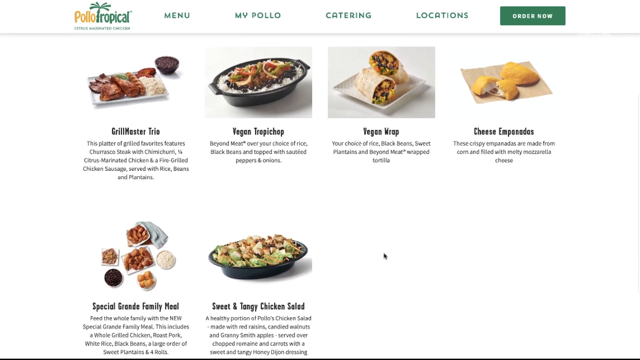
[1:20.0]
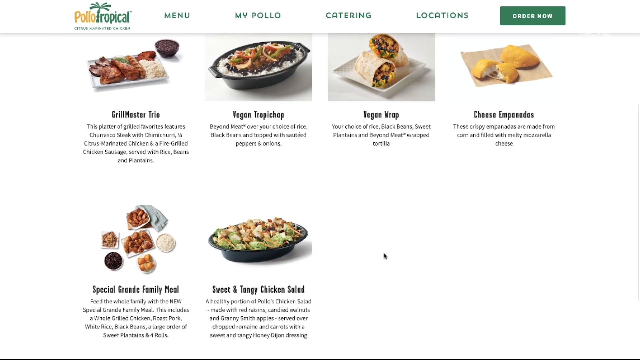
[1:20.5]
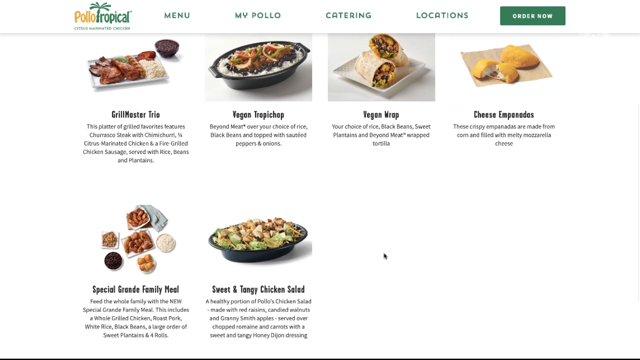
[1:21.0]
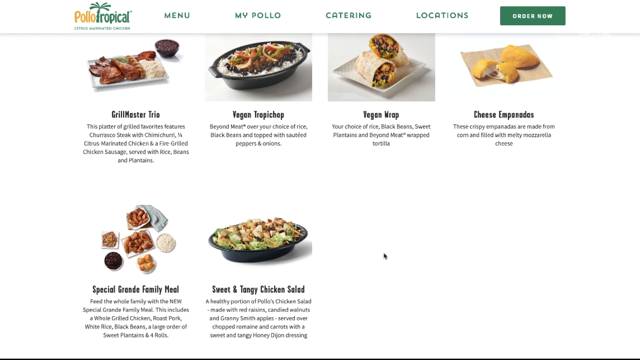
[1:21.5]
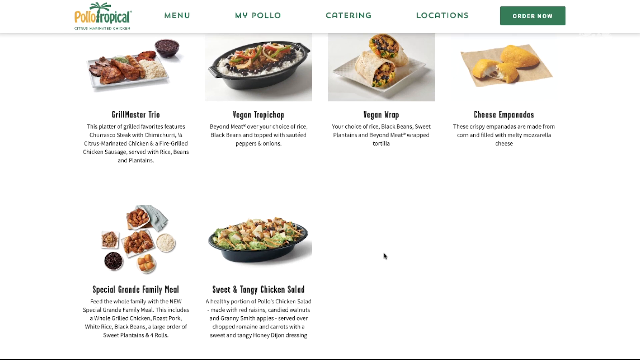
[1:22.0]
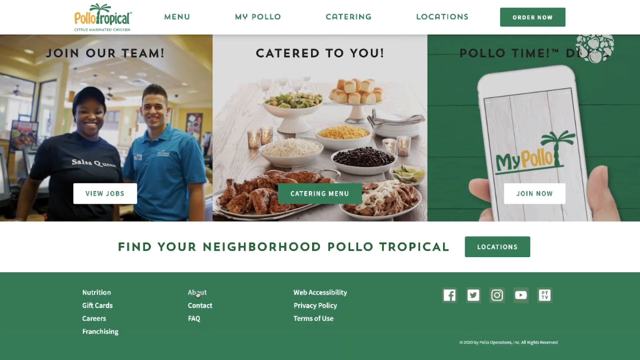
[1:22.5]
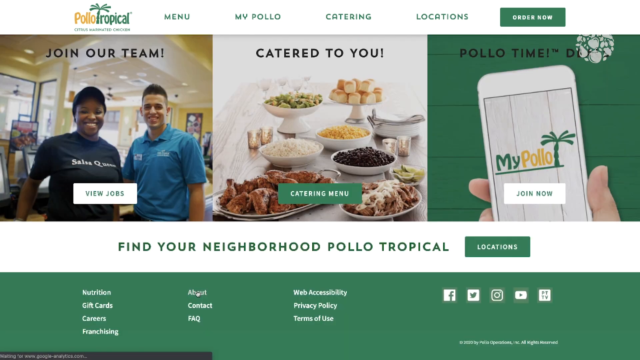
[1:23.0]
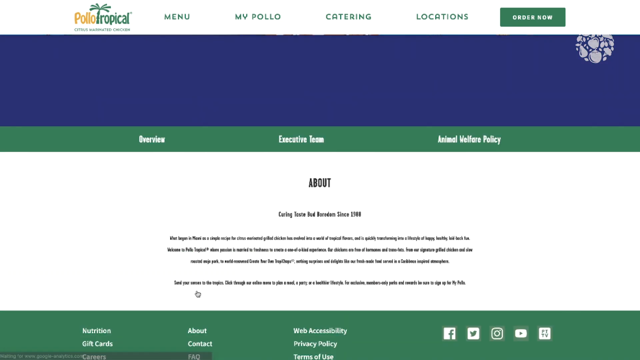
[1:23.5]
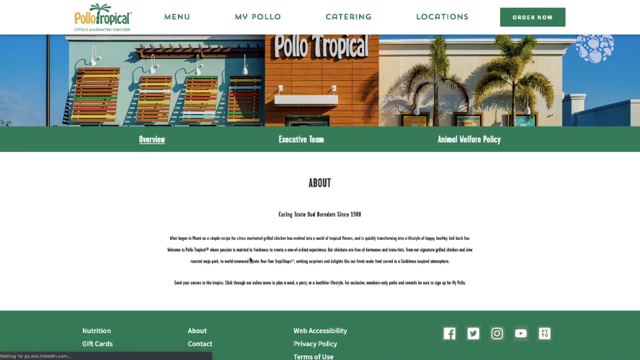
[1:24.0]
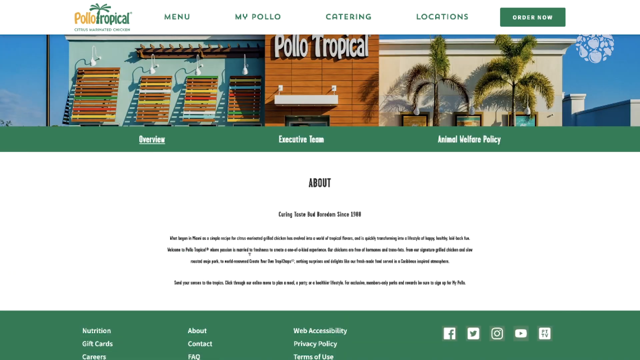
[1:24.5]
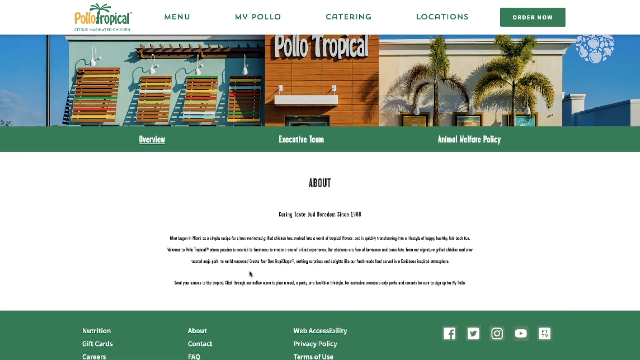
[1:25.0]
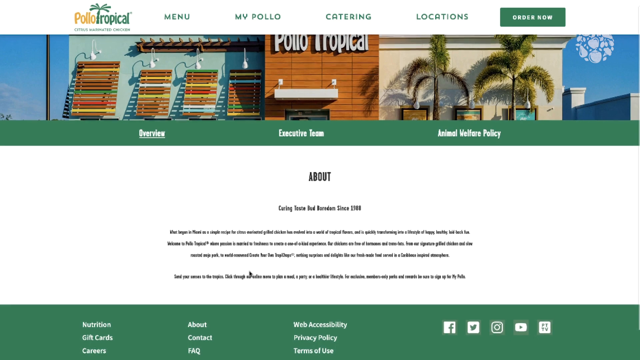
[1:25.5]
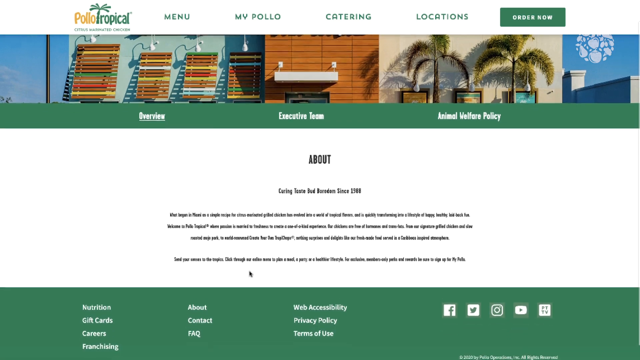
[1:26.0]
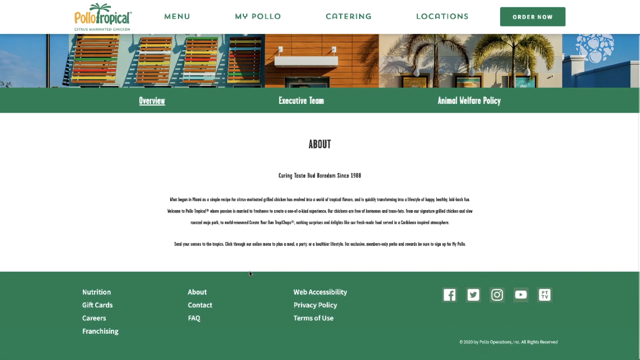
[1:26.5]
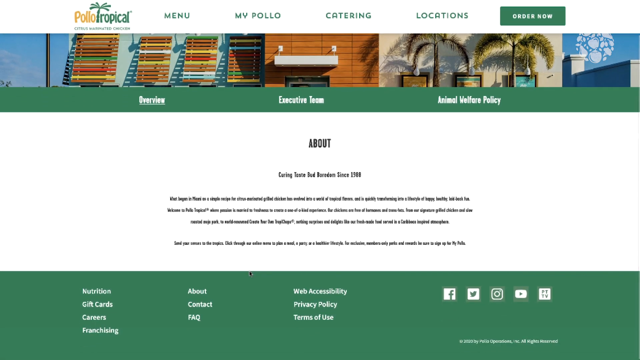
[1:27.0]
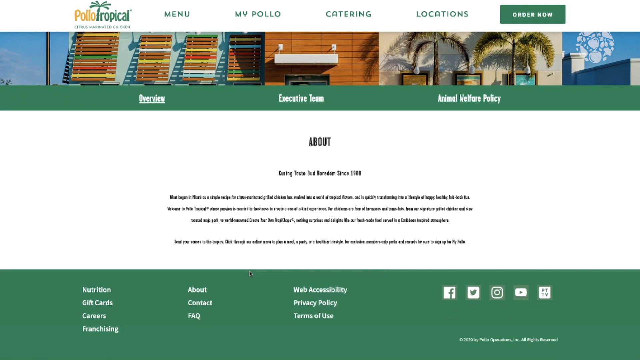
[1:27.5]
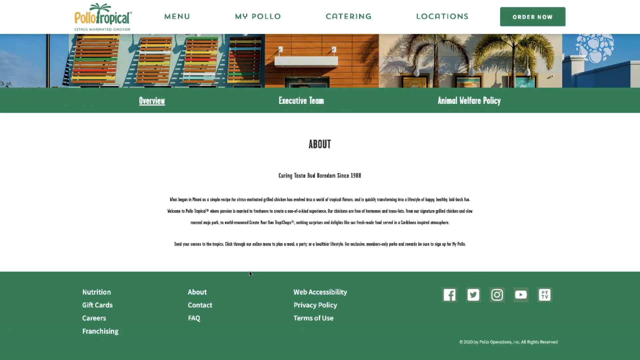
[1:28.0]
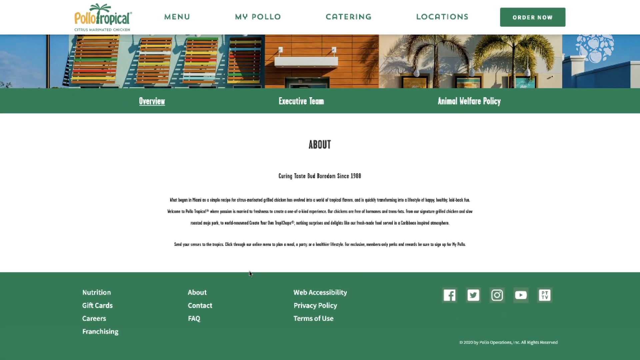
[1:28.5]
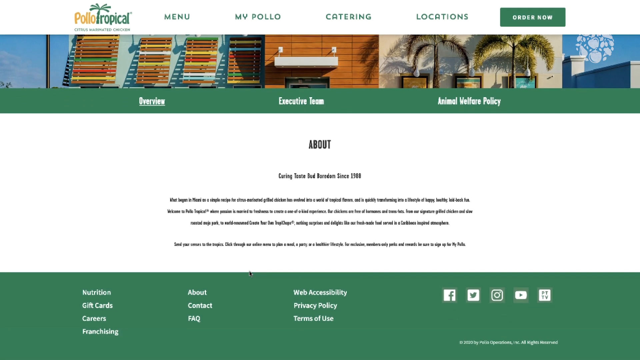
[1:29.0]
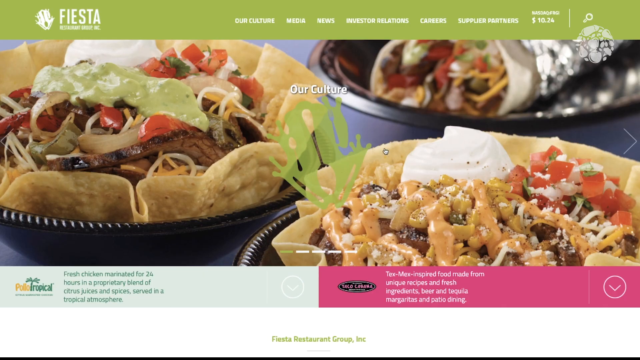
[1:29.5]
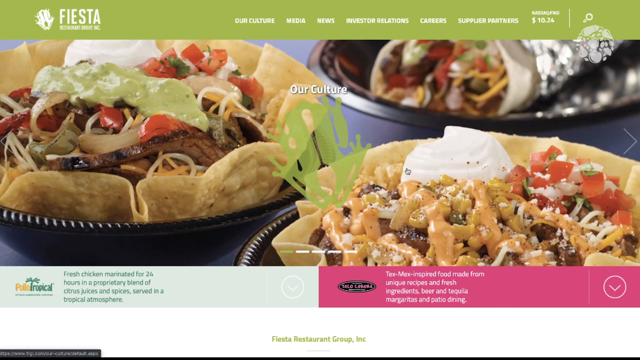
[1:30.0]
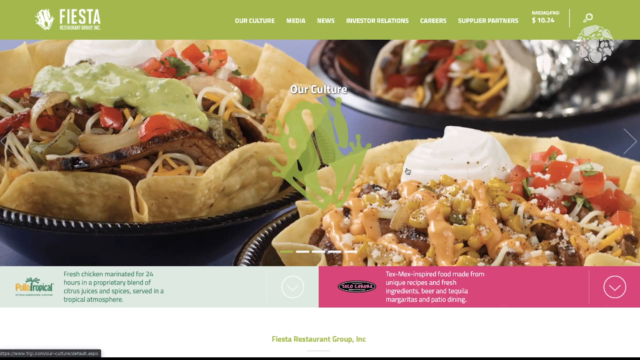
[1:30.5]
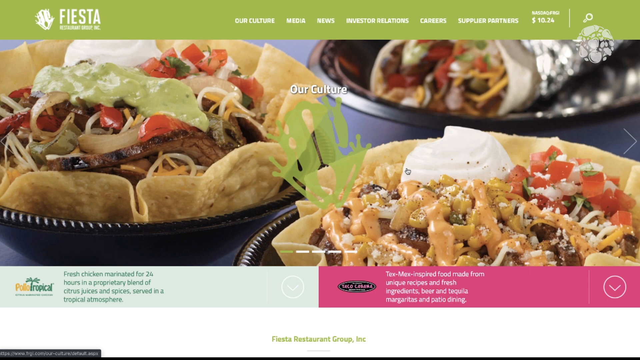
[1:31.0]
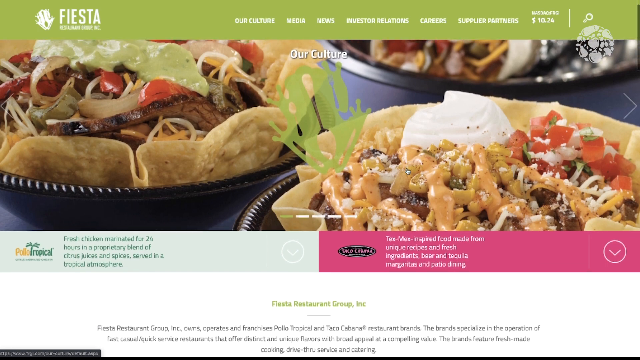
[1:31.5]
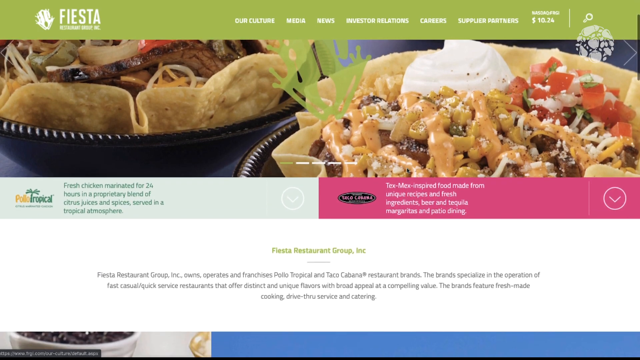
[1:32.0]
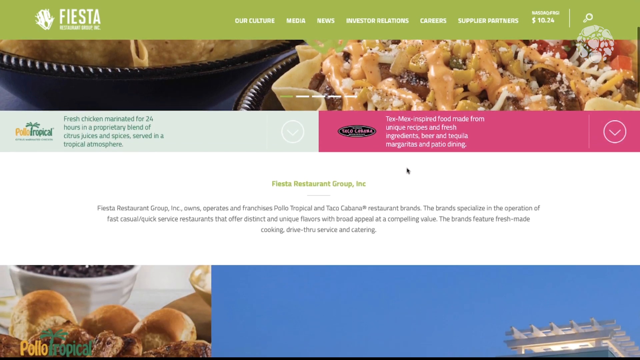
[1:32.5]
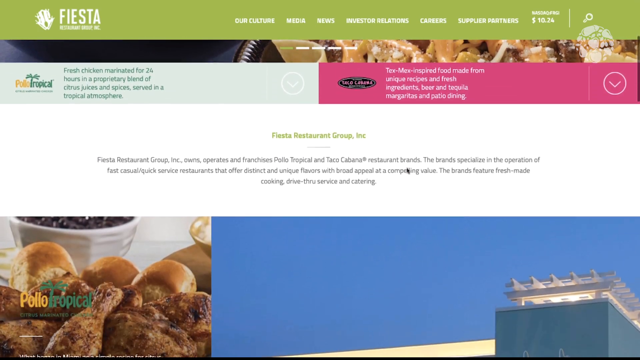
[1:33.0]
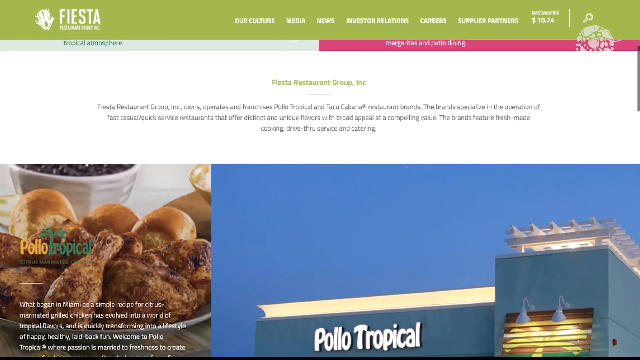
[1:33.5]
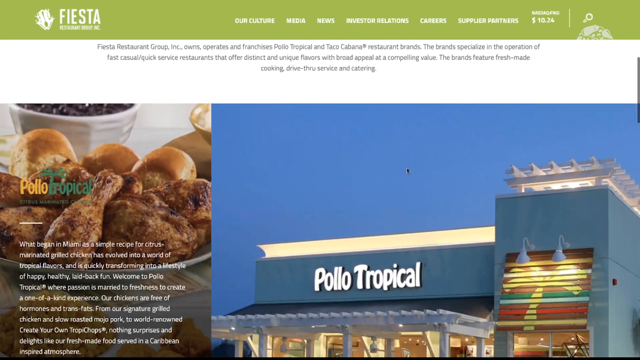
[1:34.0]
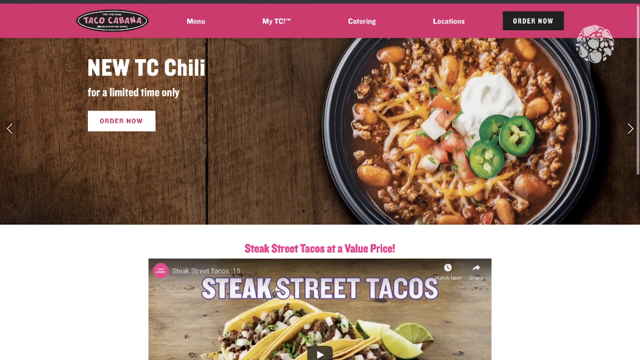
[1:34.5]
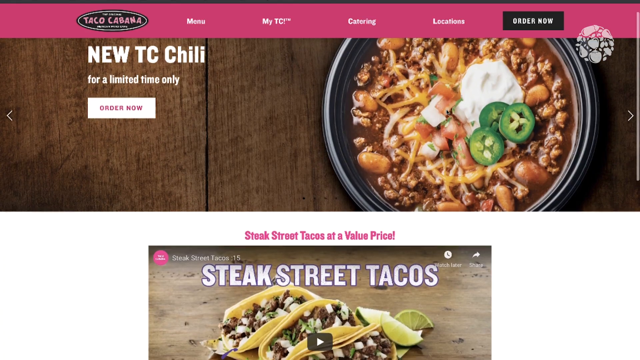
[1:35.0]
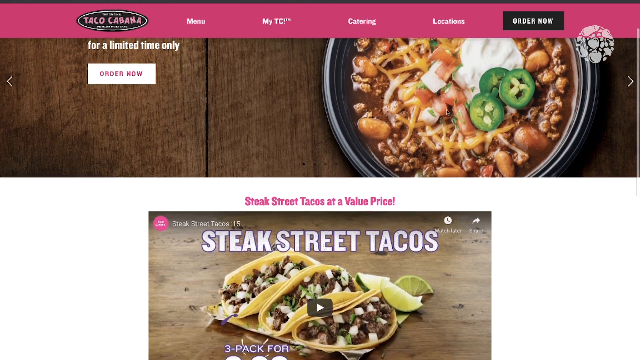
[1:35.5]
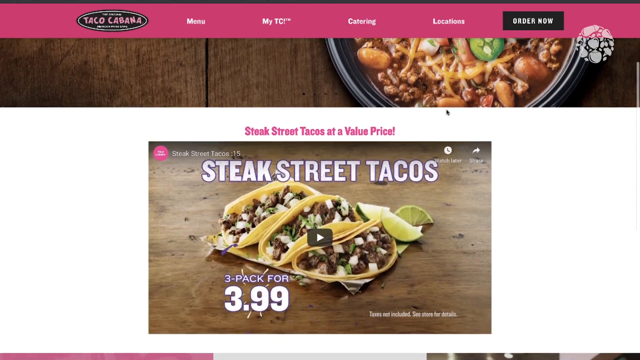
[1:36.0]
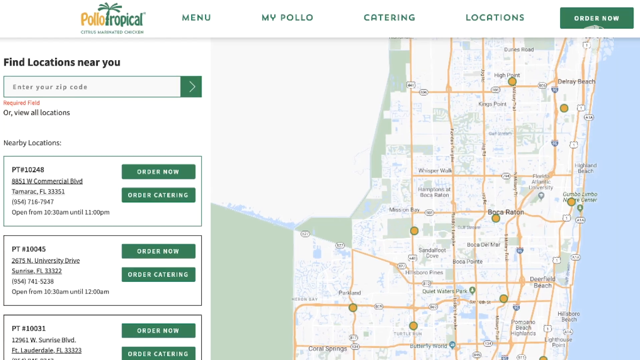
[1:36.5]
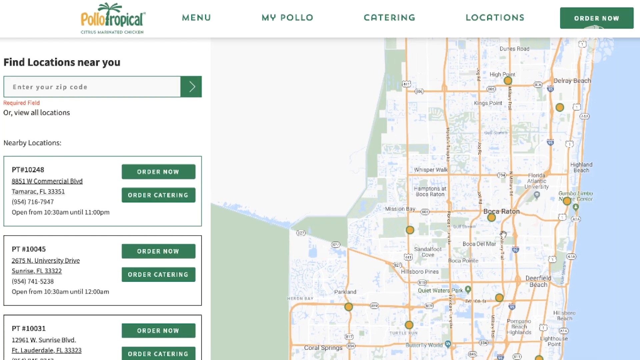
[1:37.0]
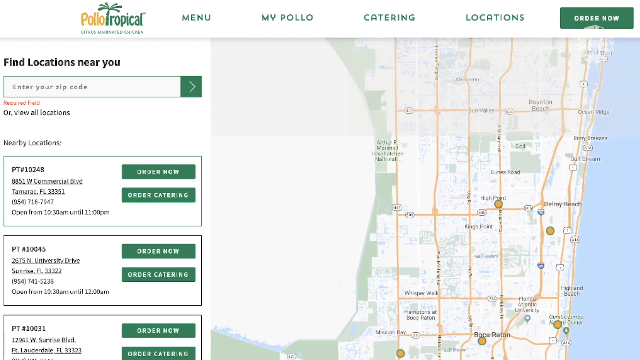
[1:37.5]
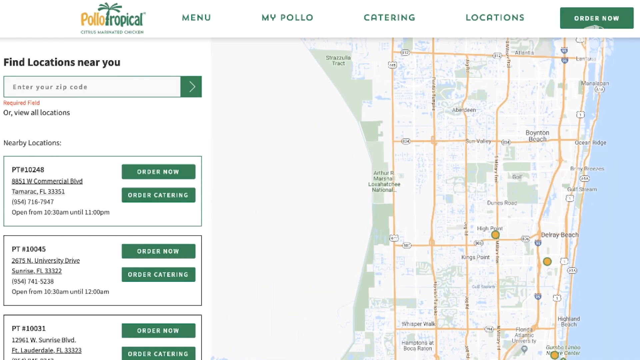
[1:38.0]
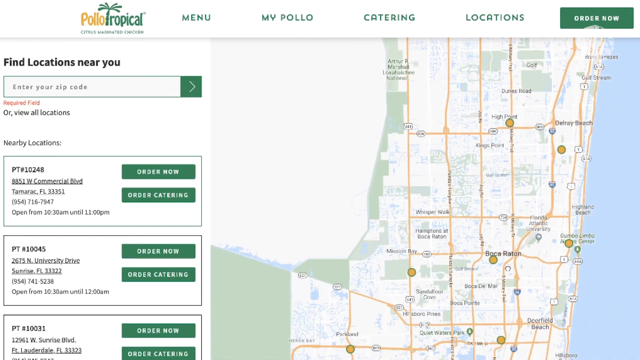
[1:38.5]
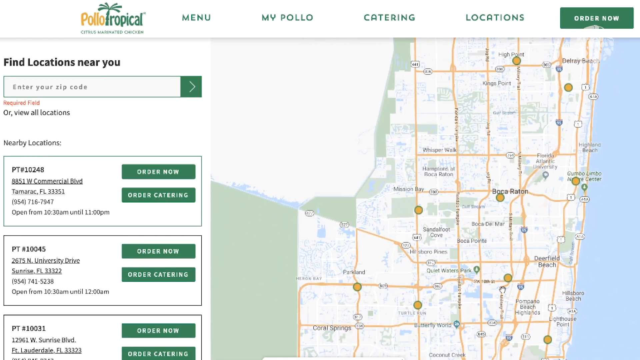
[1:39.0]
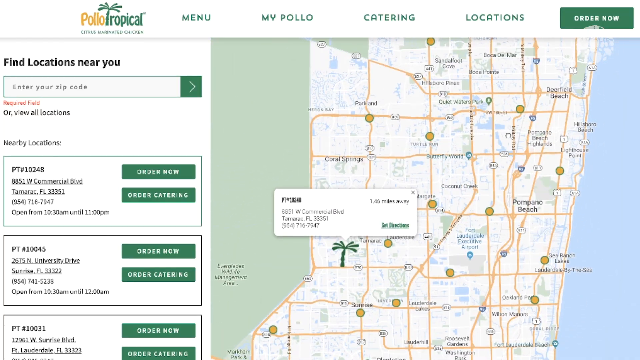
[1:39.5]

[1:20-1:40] The food or order menu is displayed, showing a variety of dishes. A picture shows a lady in black wearing a cap and a young man in blue, alongside "join our team." A phone displays their logo, probably indicating how to download the app. A "Find Your Neighborhood" locations section appears, along with links for nutrition, gift cards, careers, franchising, About, Conduct, FAQ, Web Accessibility, Privacy Policy and Terms of Use, plus social media icons for Facebook, Twitter, Instagram and YouTube. An About page shows a building, with animal welfare policy, executive team and overview sections. Another page says "Fiesta, our culture" and displays a variety of food.